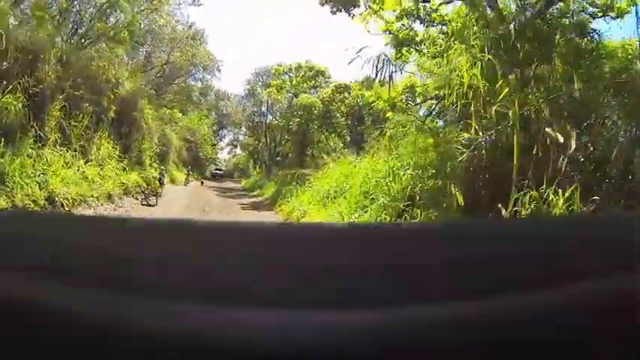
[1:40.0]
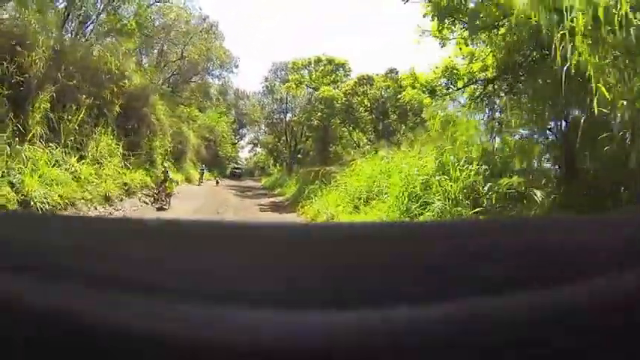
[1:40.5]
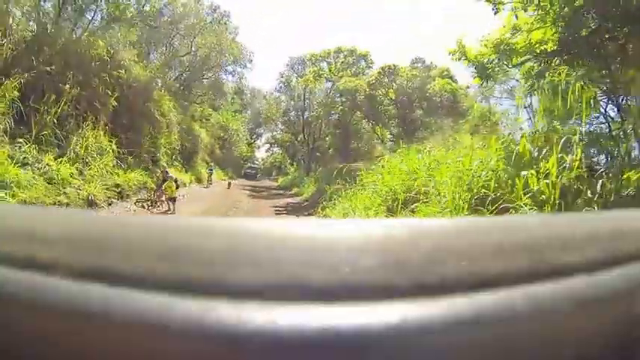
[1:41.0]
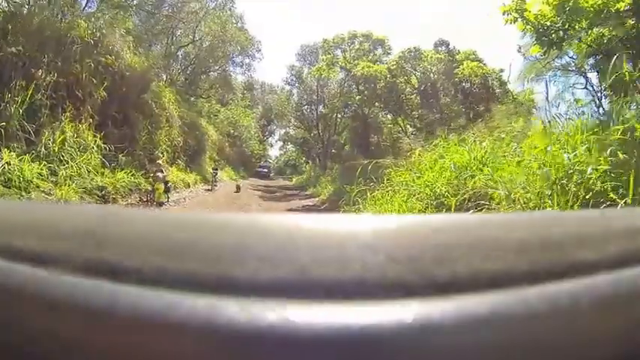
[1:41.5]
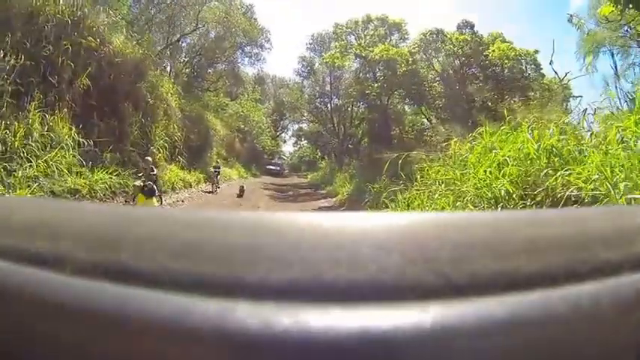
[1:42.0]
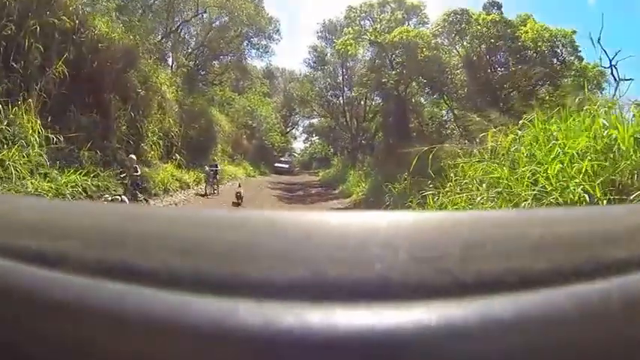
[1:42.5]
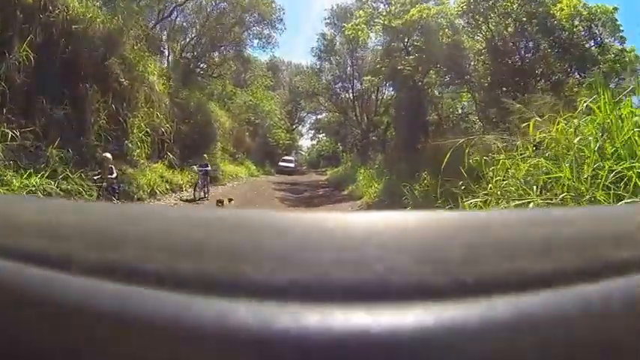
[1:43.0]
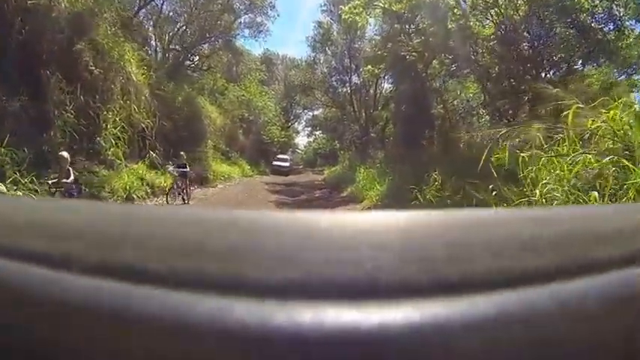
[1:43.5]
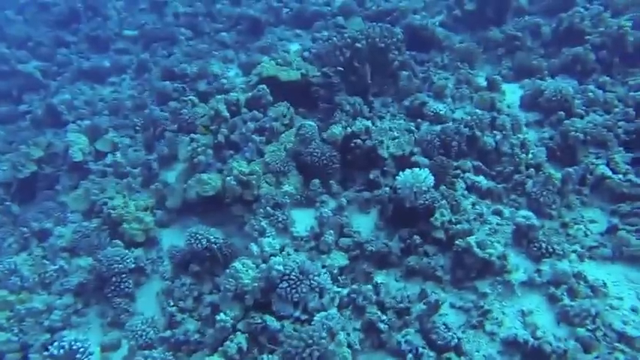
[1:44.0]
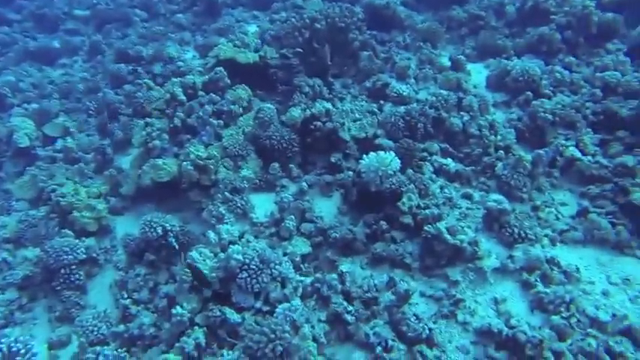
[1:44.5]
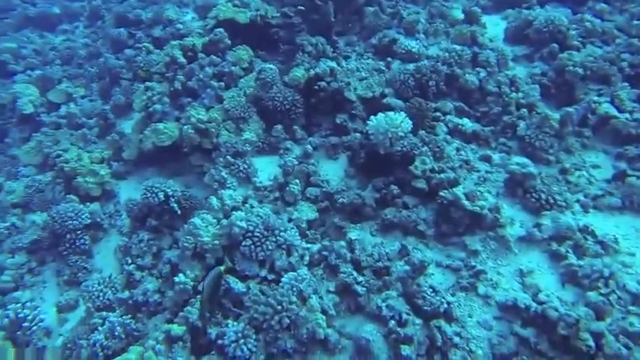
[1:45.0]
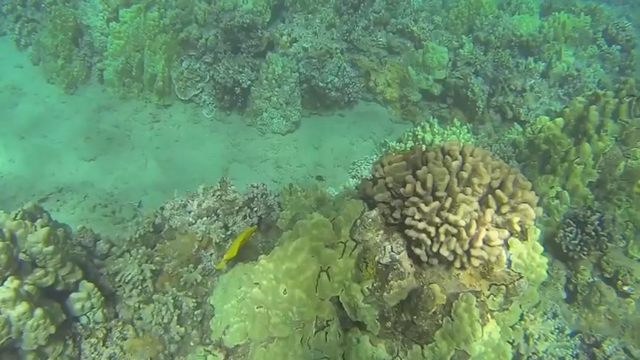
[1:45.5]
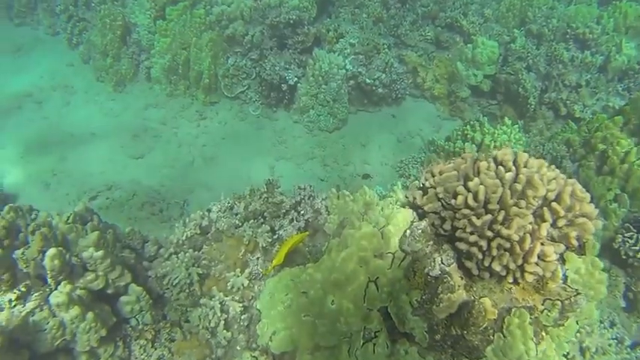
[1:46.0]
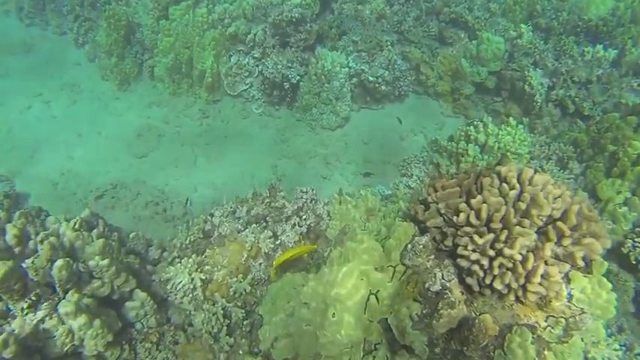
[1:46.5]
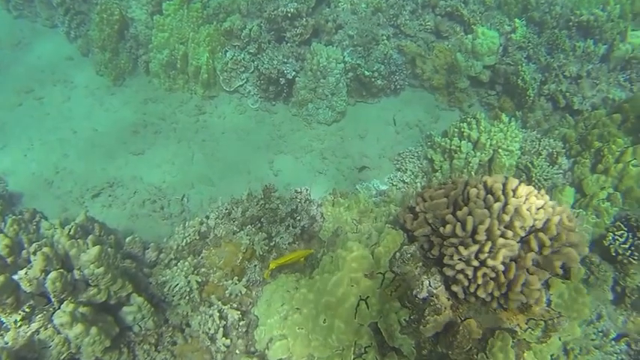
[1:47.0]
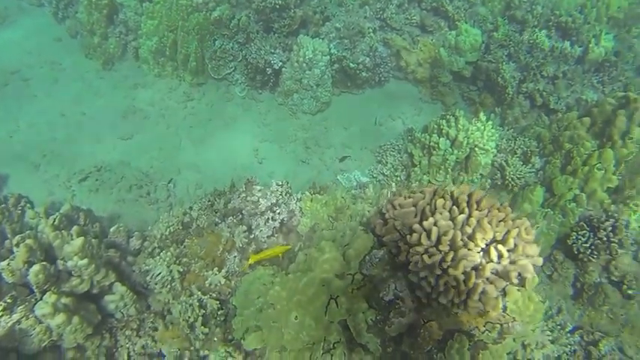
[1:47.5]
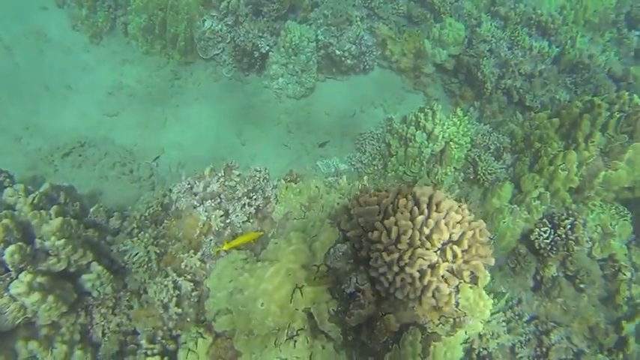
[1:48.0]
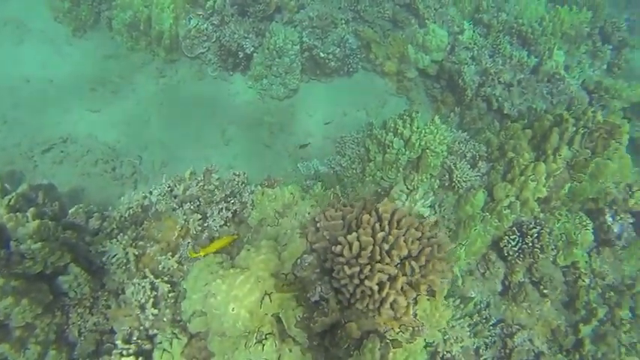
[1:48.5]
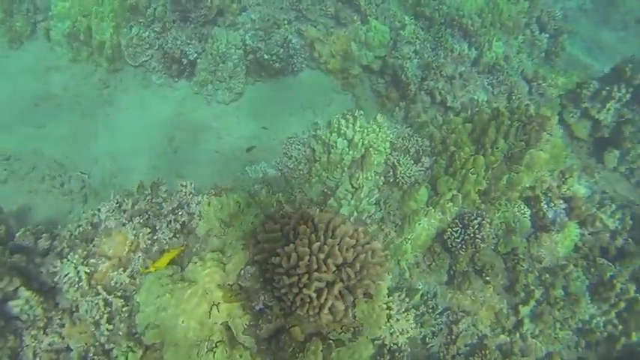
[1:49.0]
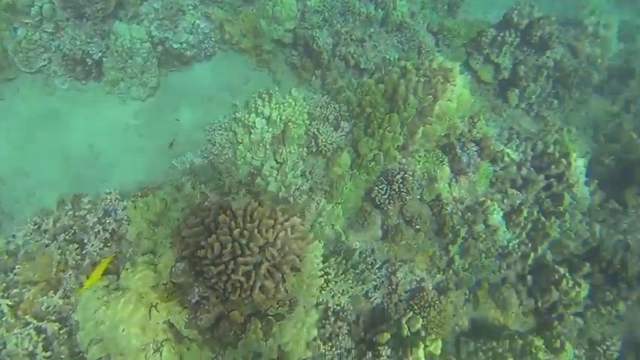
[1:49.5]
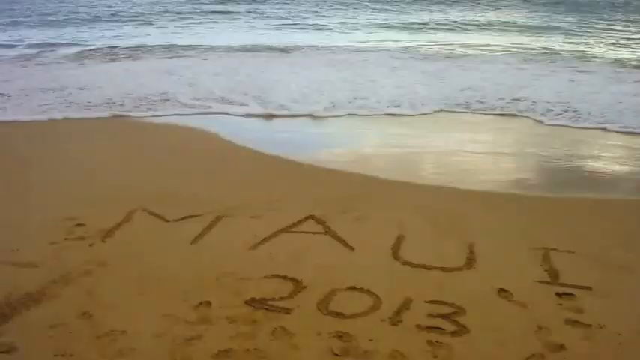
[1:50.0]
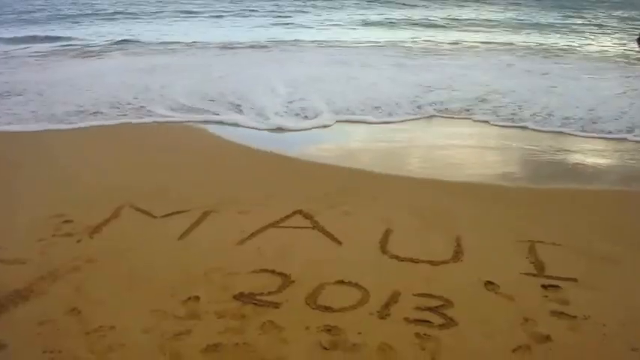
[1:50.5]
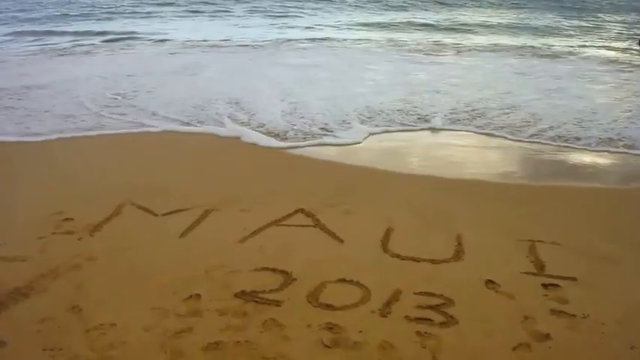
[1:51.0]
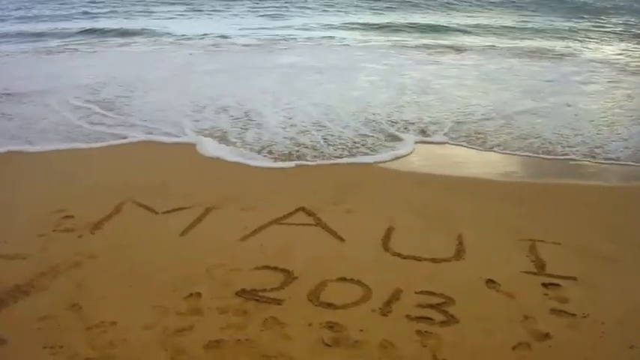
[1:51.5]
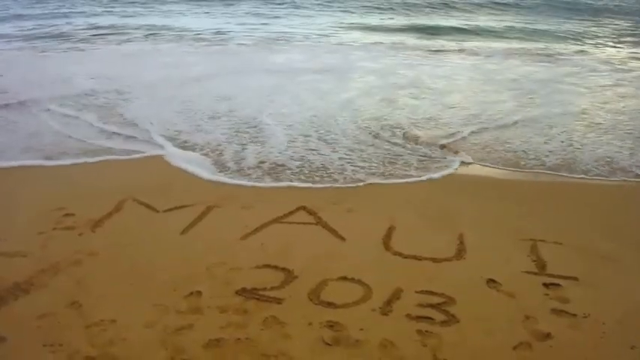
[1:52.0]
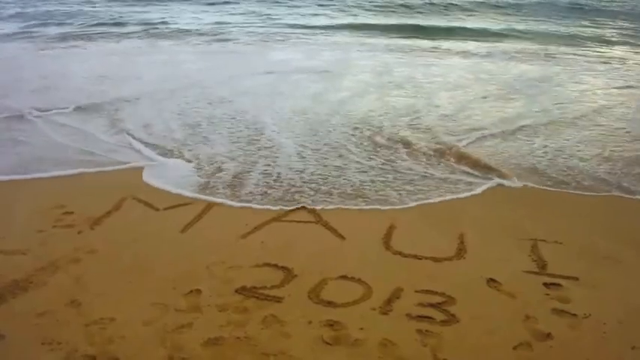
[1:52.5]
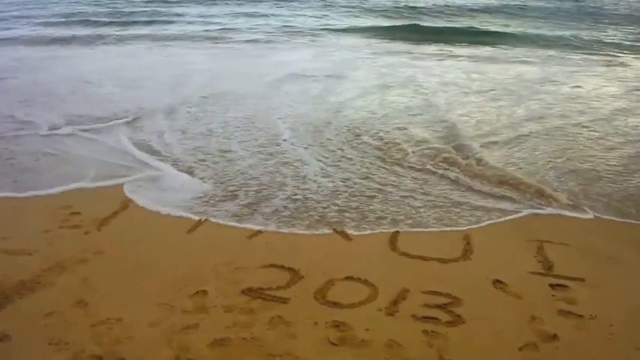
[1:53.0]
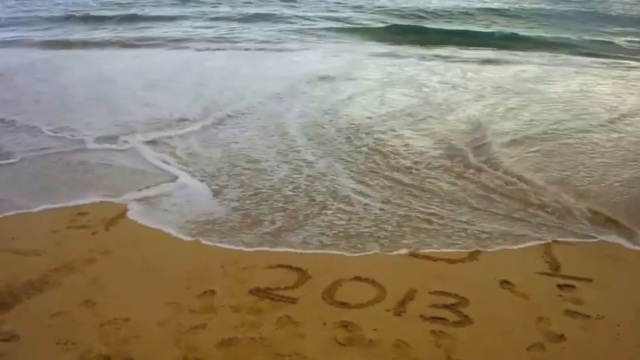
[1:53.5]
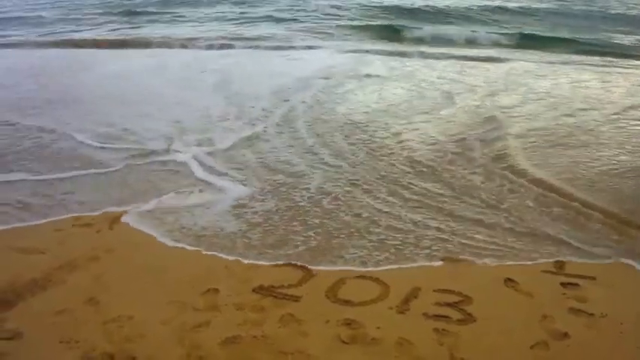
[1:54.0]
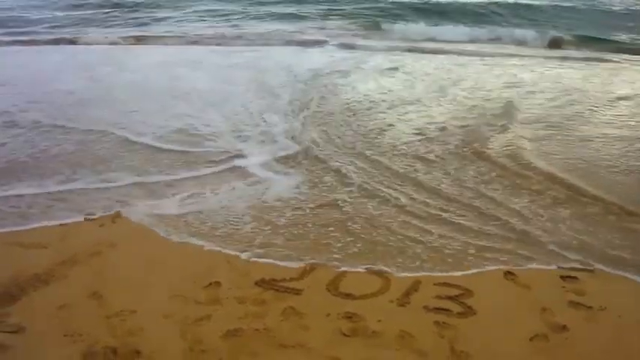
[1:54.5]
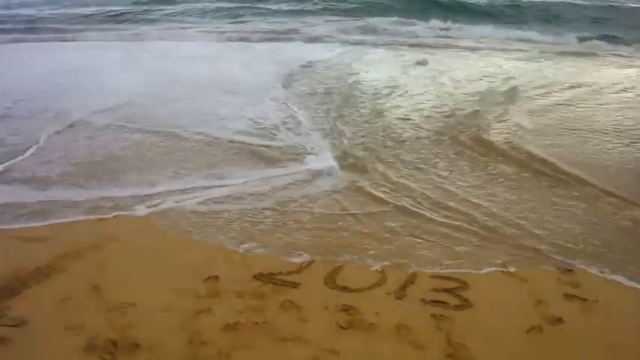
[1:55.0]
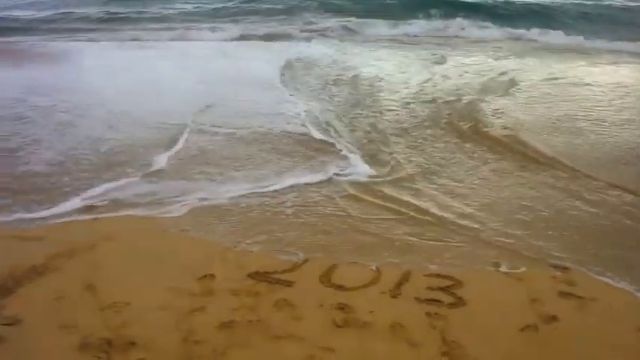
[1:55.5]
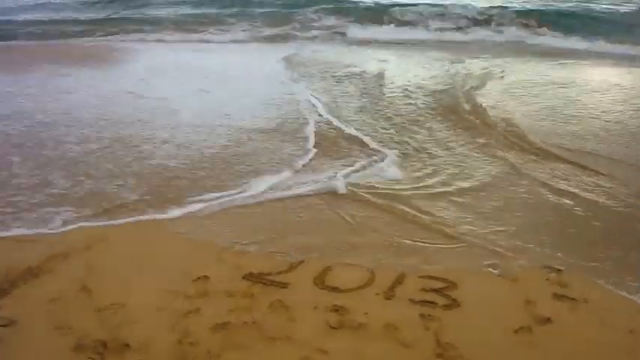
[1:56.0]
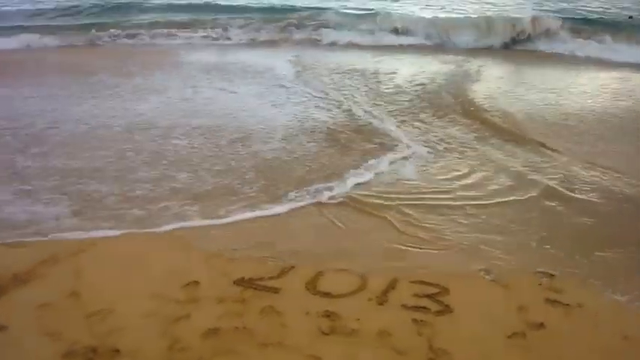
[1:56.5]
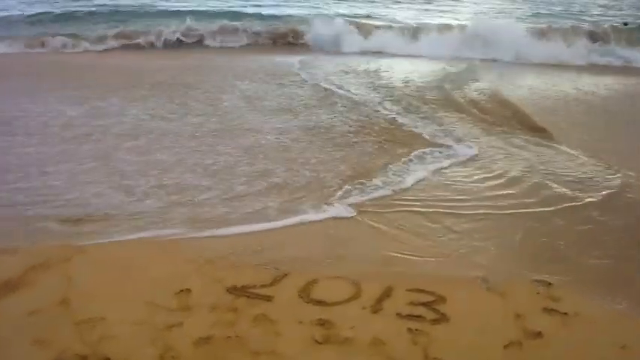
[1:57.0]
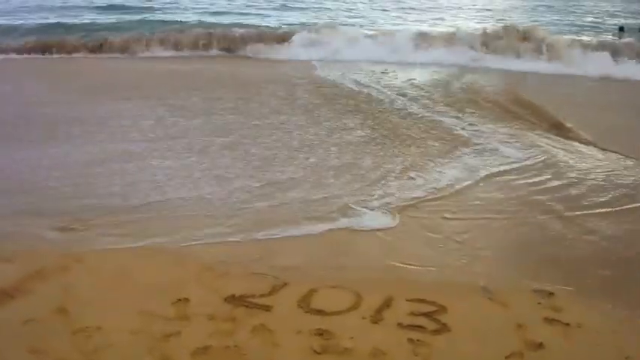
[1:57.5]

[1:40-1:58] A camera on the dashboard of a car shows it driving along a brown dirt road, with green trees and green brush on either side. There seems to be a vehicle up ahead, and people are walking on the left-hand side; they look like some little boys and a dog, with bicycles, on the left side. The scene then shifts underwater again, looking at more coral at the bottom that is kind of brown, green and a bit blue, with a little grayish sand at the bottom. The next scene shifts to brown sand on the beach, where someone has carved out "Maui 2013". White, foam-like waves come toward the handwriting. At the top left is the image of a man's face, which looks drawn, white with a beard, and beside it white lettering reads "GoPro Hawaii scuba diving". The waves come over the "Maui 2013" drawn into the sand, and the letters disappear as the water retreats back into the ocean, leaving just "2013", barely visible.